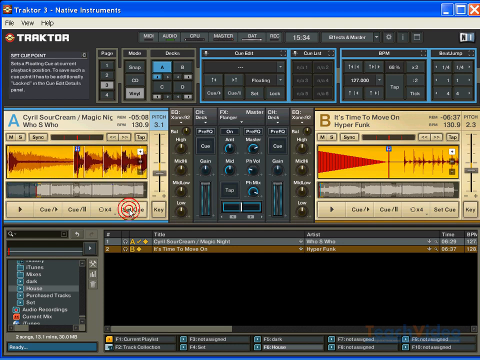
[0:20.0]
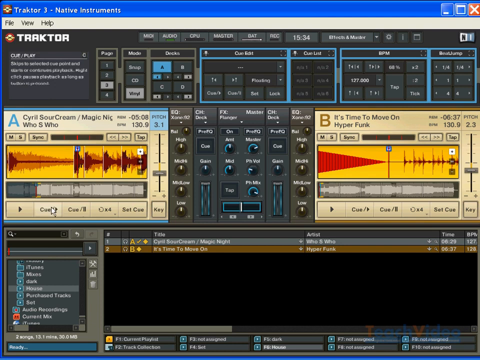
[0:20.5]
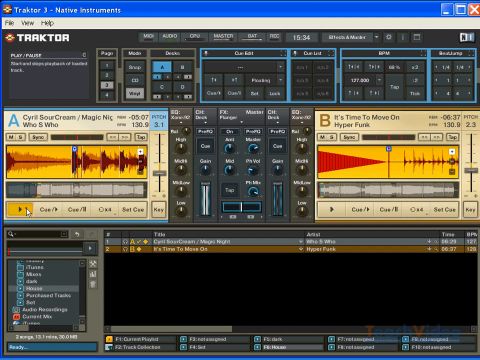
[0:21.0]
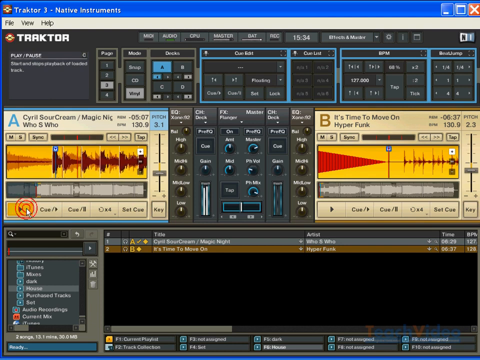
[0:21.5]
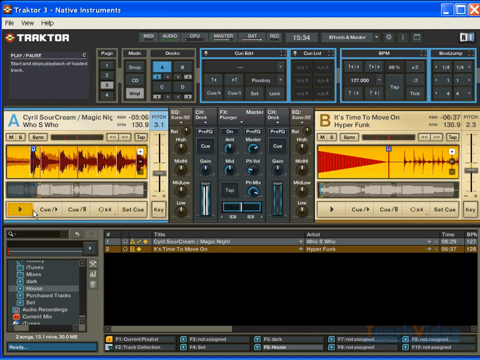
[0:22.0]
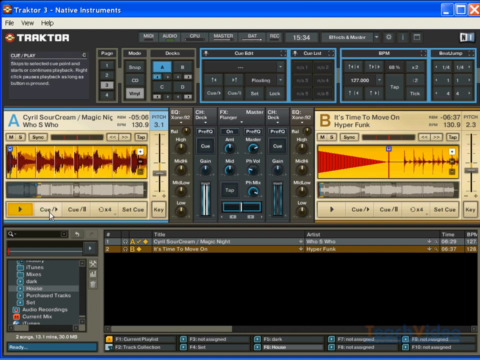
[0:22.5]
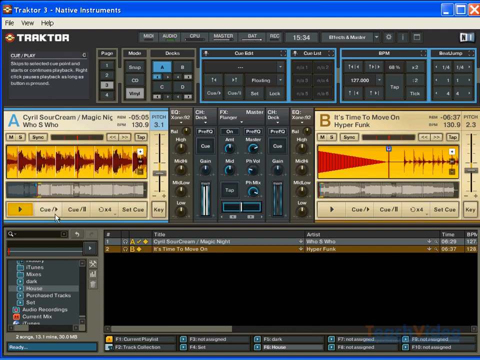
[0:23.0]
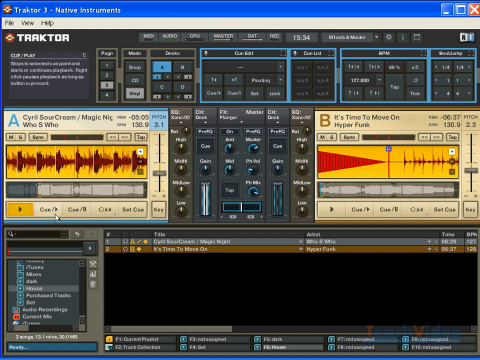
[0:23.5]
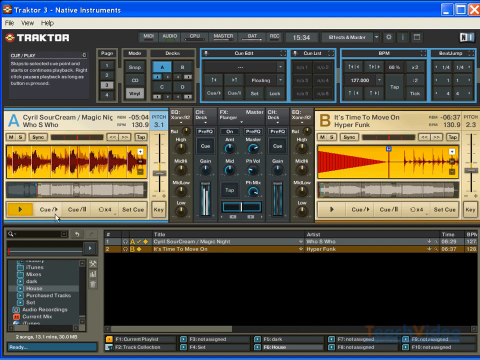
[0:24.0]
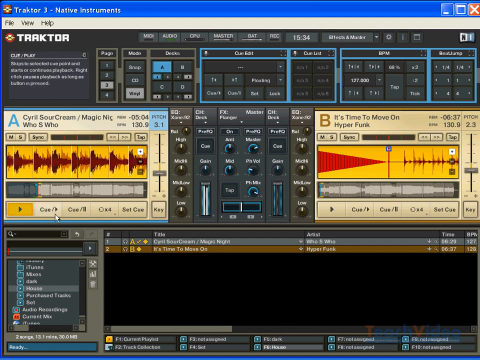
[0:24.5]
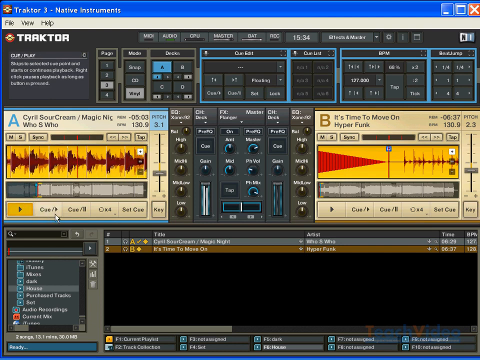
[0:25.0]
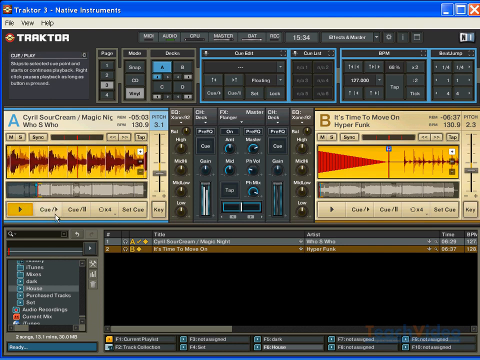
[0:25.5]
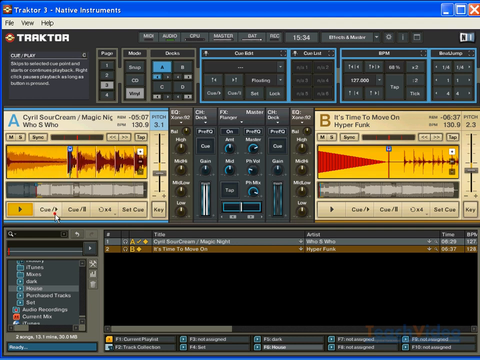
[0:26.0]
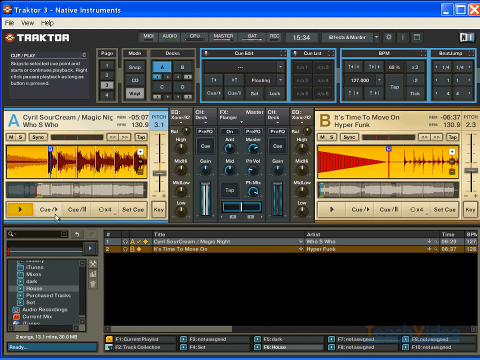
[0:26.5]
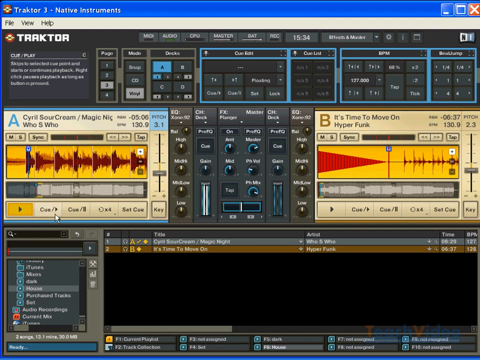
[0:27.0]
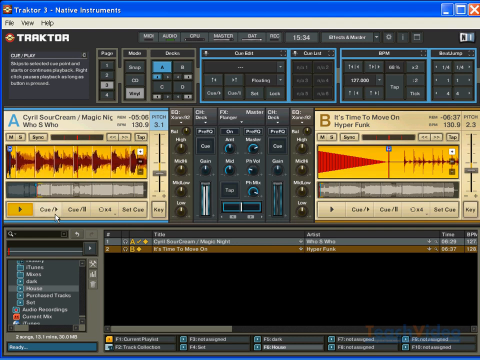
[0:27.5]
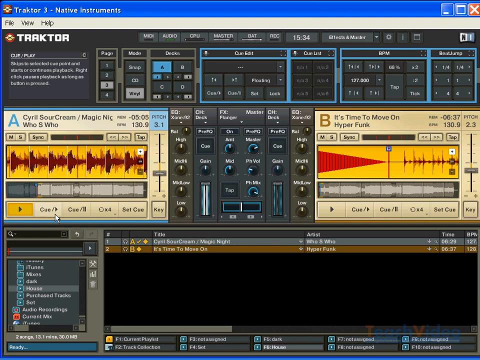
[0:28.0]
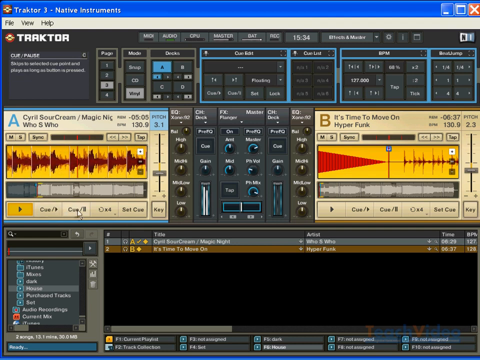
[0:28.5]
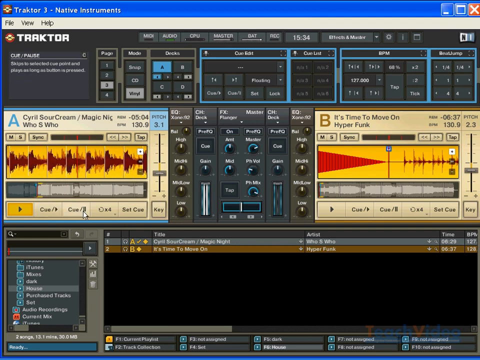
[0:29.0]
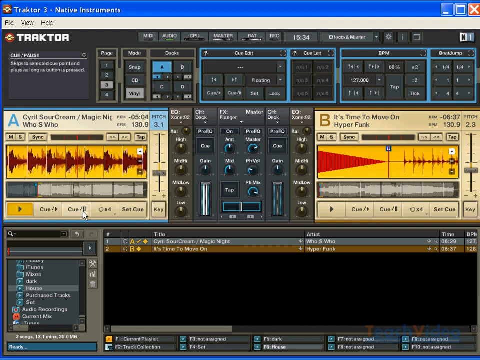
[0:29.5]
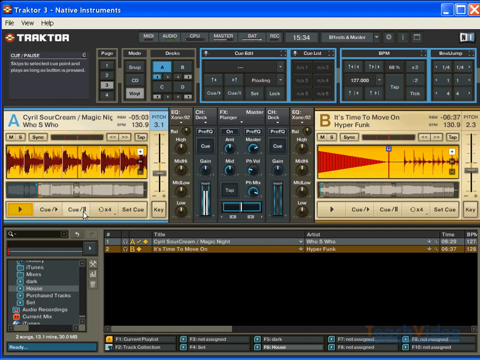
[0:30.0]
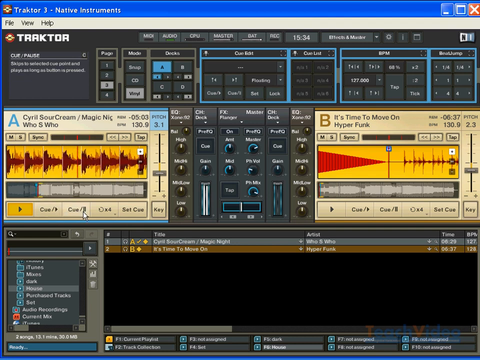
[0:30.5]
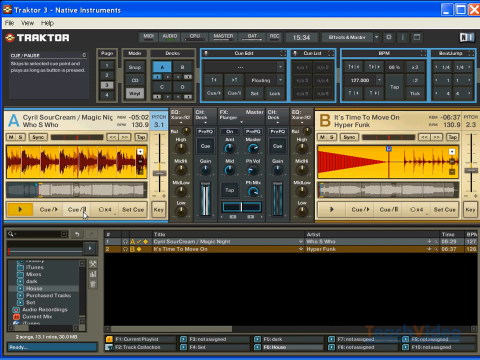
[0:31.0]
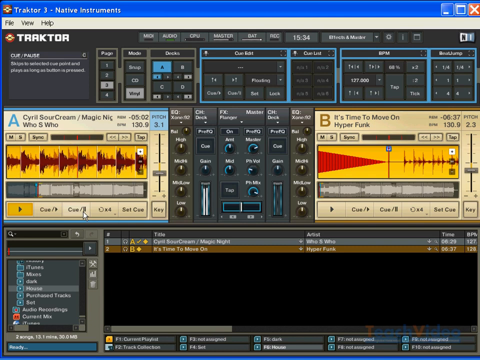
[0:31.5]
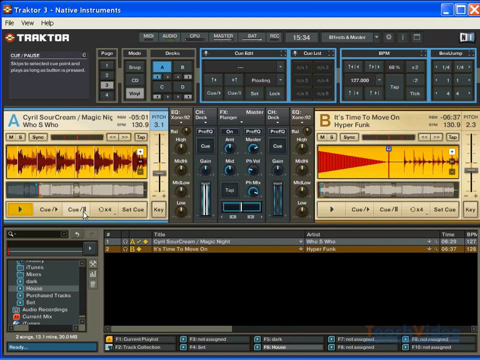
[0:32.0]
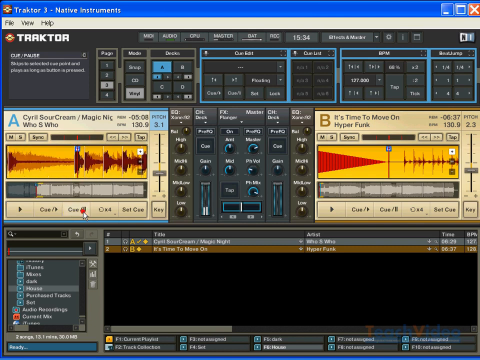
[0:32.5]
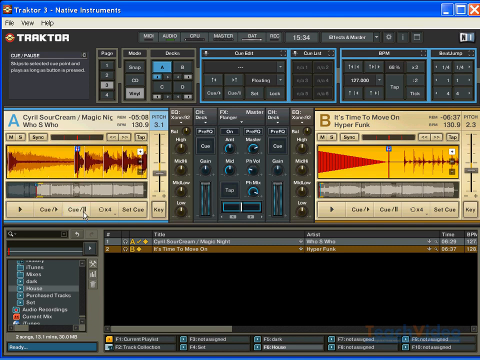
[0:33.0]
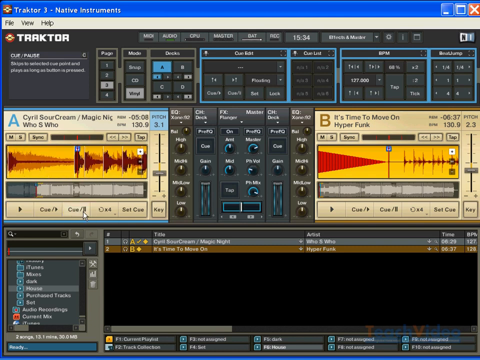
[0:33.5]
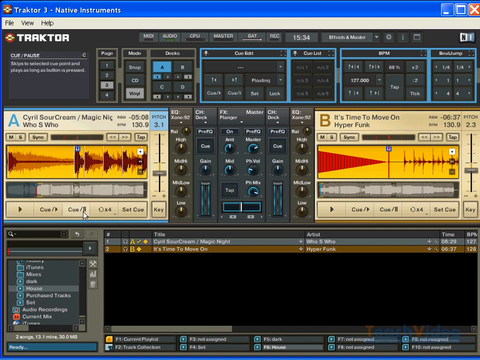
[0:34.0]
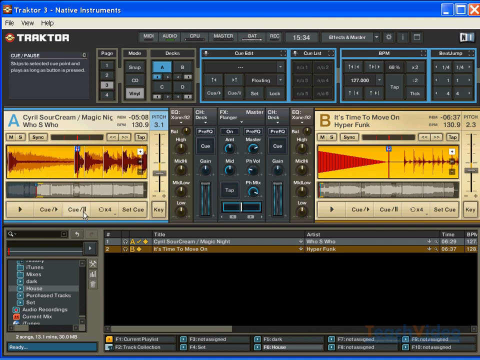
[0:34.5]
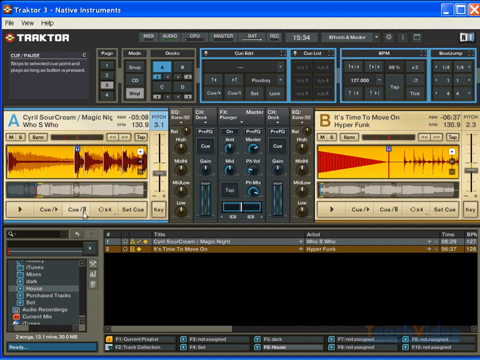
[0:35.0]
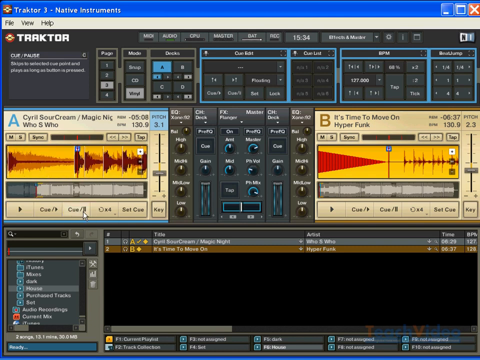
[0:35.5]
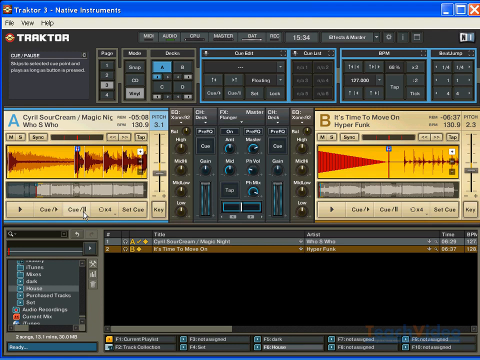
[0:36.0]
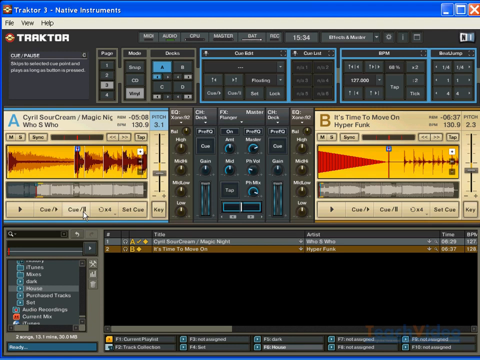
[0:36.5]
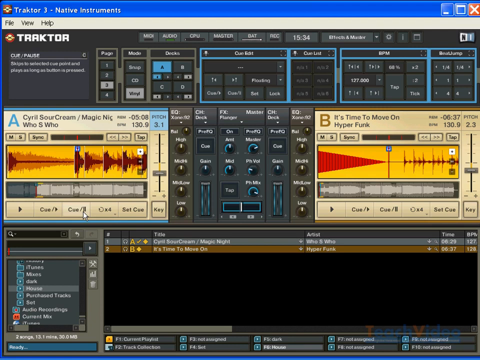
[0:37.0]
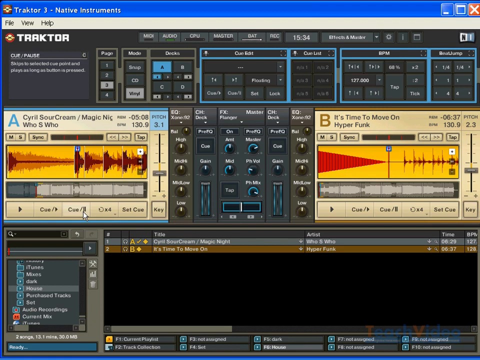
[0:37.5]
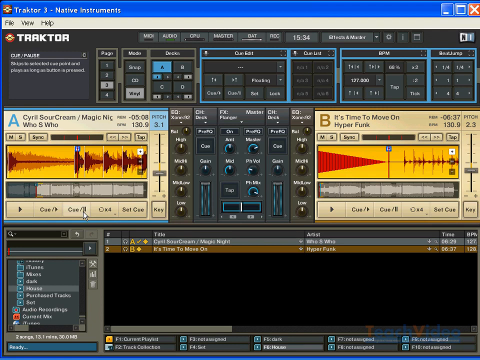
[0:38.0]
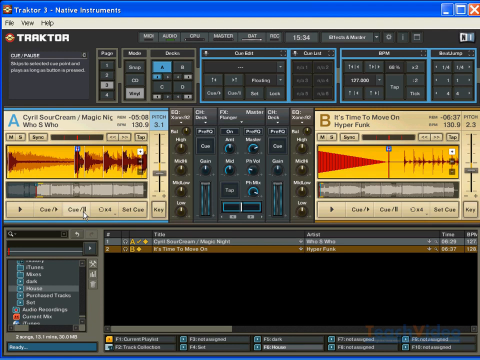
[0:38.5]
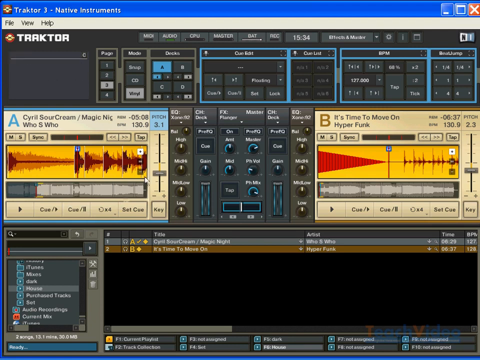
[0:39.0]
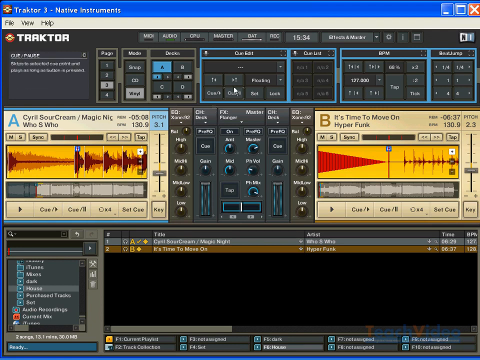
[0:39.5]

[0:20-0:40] The same audio program is on screen. The play button is just an arrow pointing to the right, with no text. The mouse clicks the button to its right, which reads "Q/" followed by a play symbol. Each click is marked by little red radar-like circles pulsating outward over the mouse. The mouse then clicks the next button to the right, which reads "Q/" followed by the pause symbol of two vertical lines, and the red sound waves in the yellow rectangle above stop moving. The mouse then moves up toward the top middle of the screen.